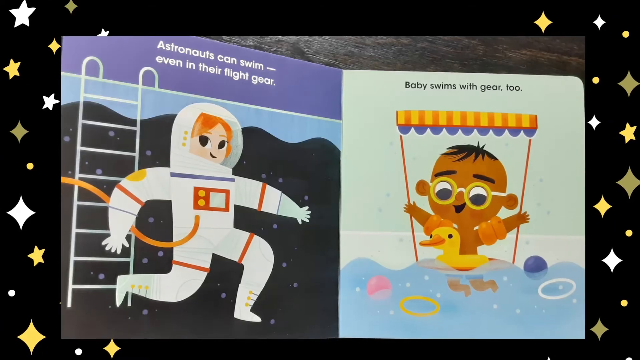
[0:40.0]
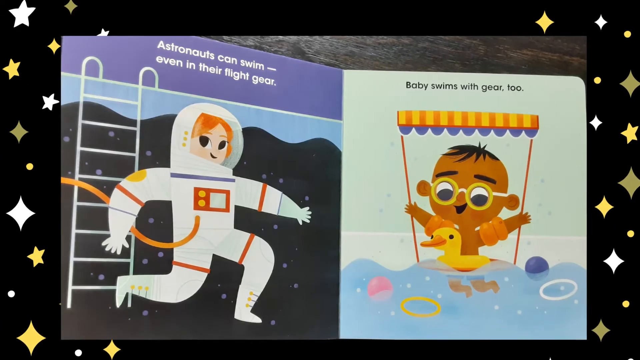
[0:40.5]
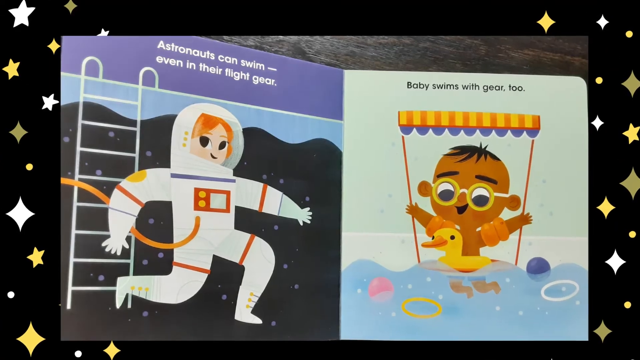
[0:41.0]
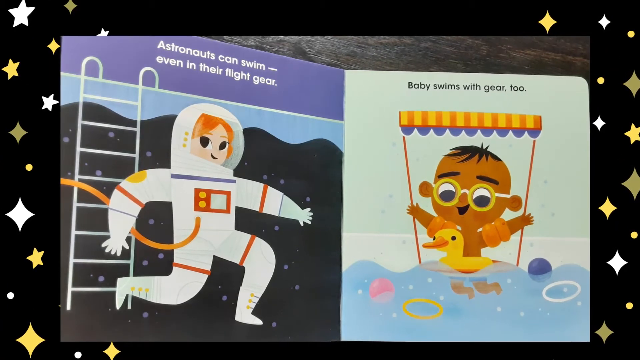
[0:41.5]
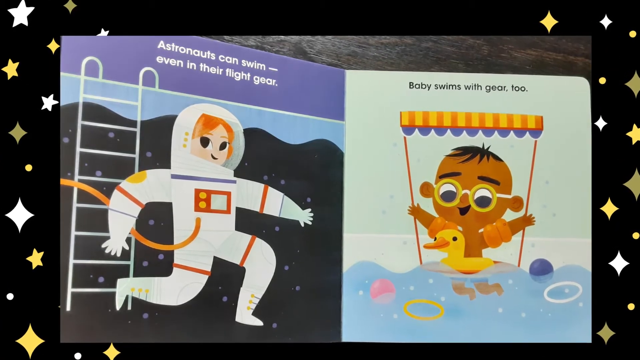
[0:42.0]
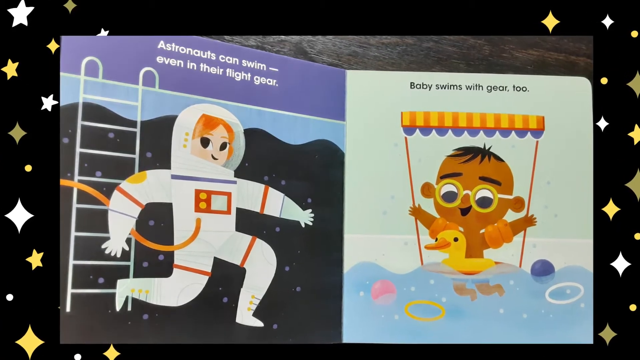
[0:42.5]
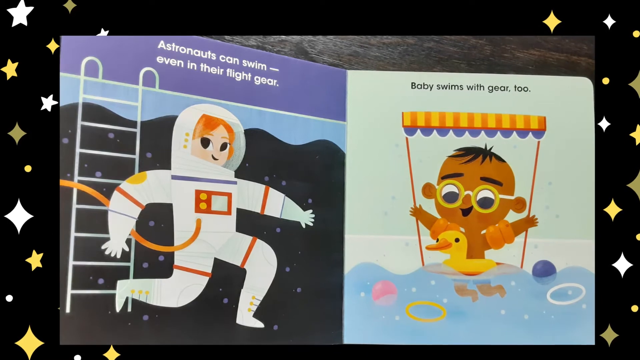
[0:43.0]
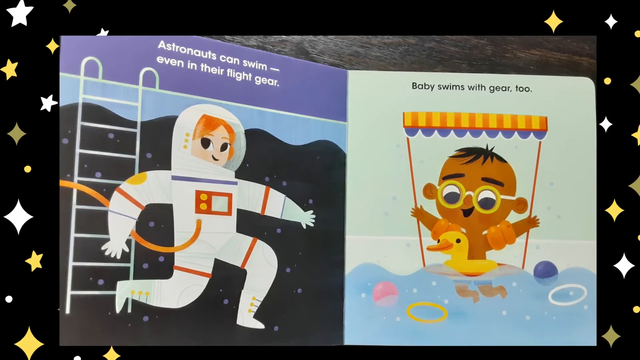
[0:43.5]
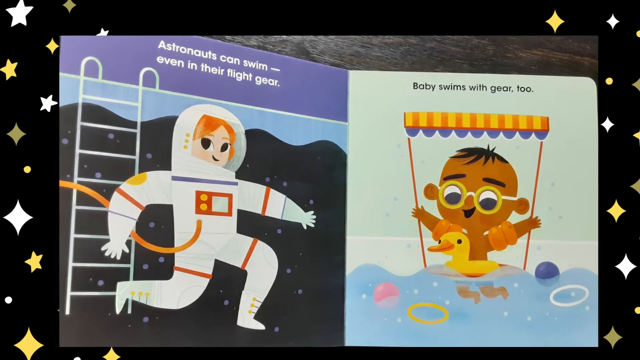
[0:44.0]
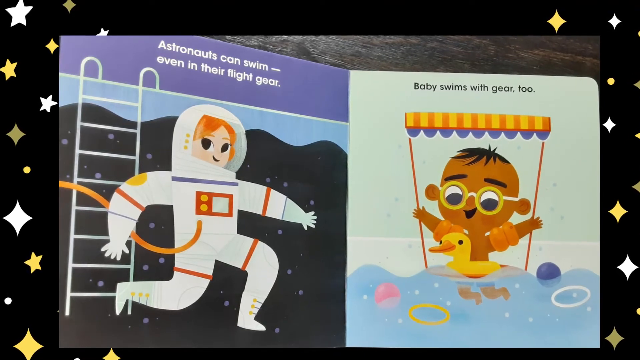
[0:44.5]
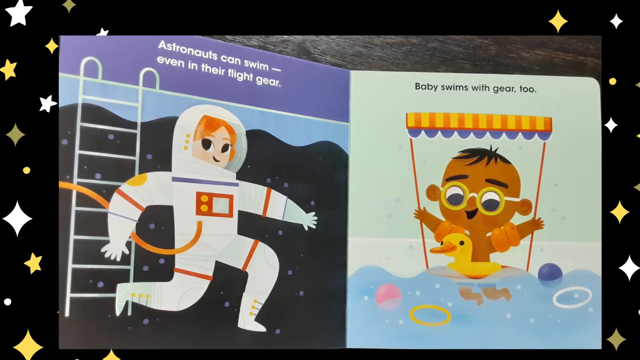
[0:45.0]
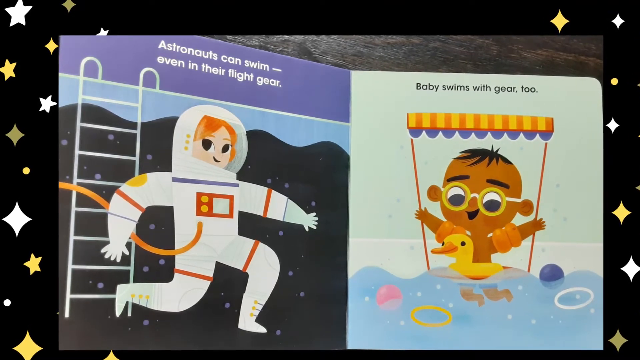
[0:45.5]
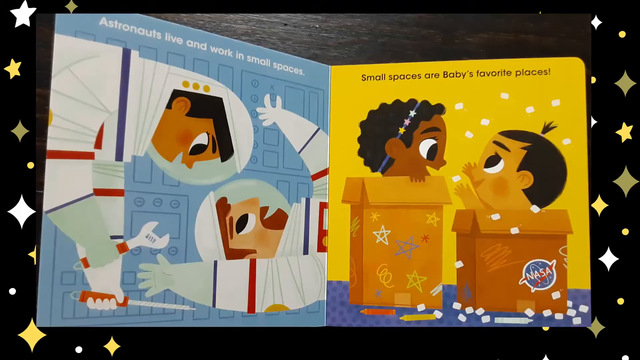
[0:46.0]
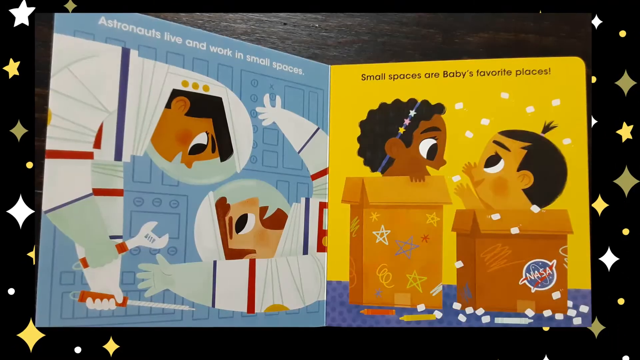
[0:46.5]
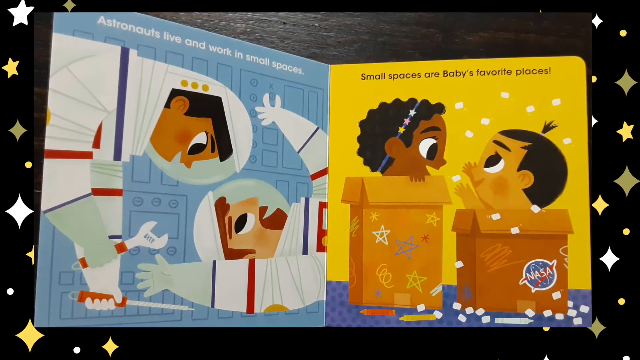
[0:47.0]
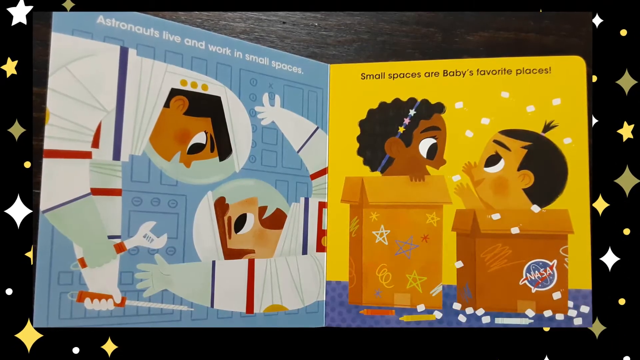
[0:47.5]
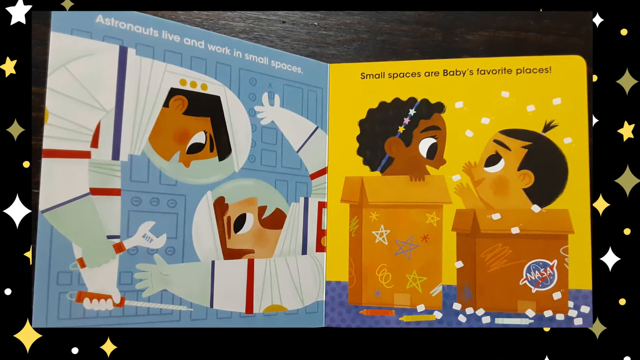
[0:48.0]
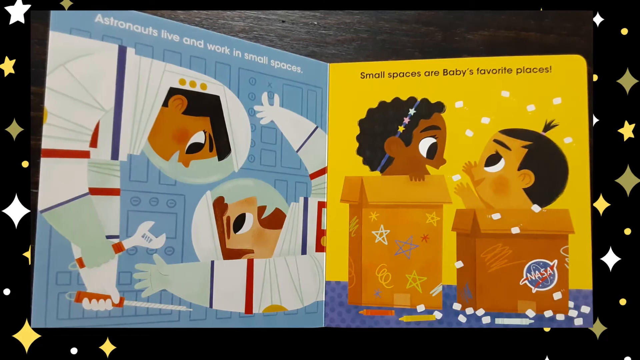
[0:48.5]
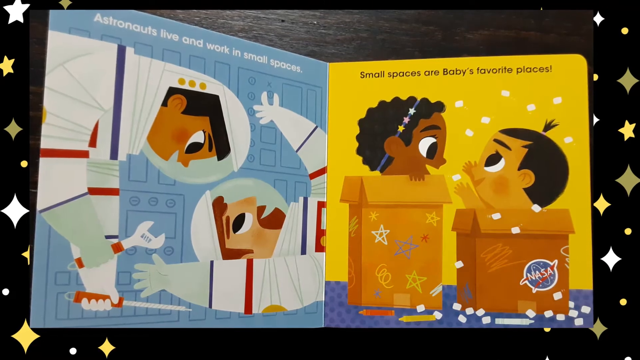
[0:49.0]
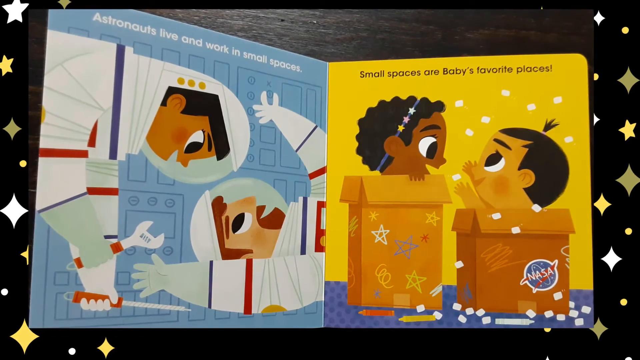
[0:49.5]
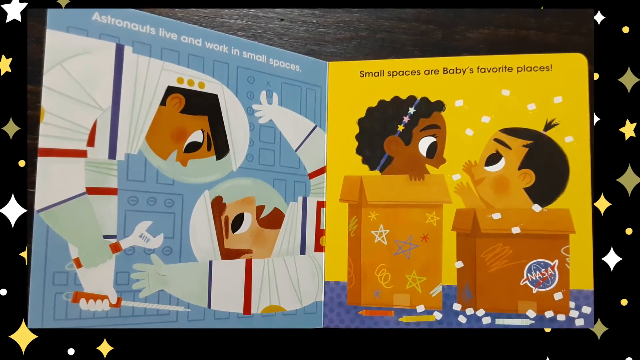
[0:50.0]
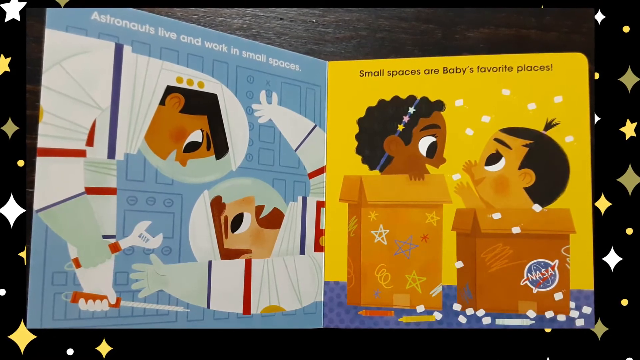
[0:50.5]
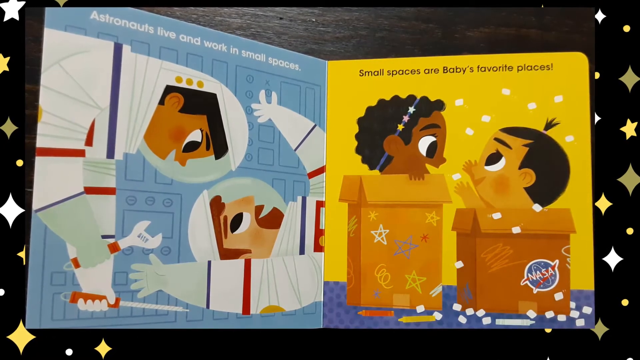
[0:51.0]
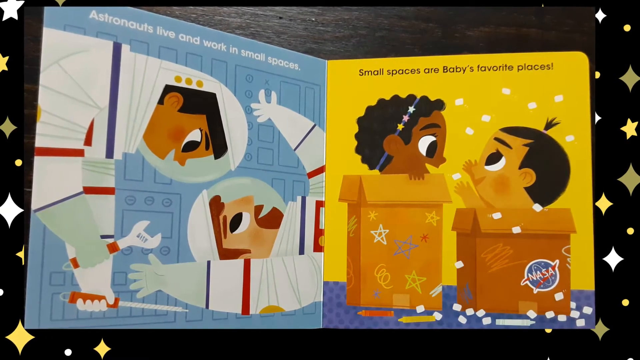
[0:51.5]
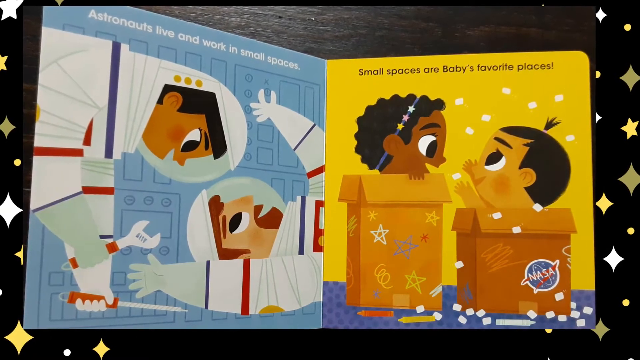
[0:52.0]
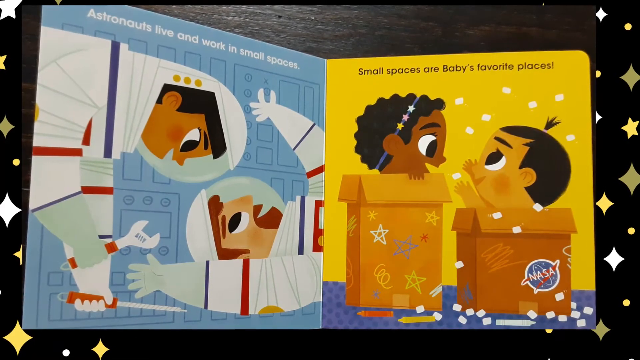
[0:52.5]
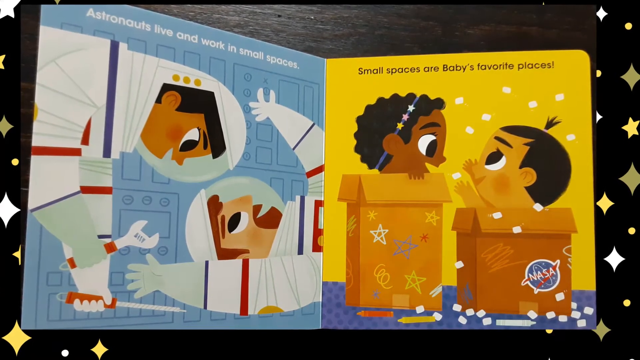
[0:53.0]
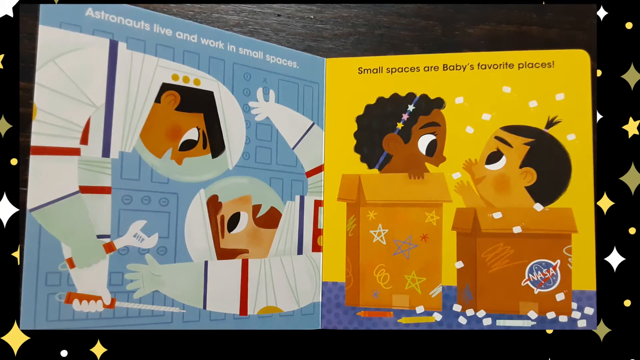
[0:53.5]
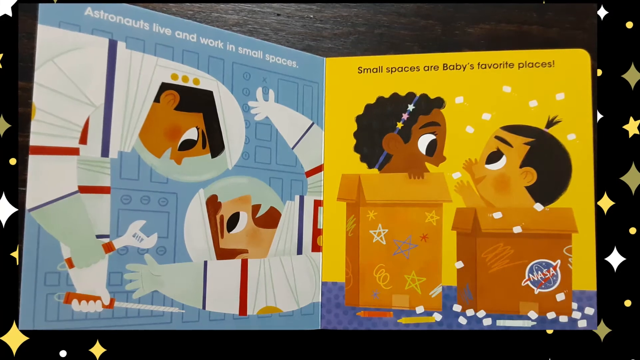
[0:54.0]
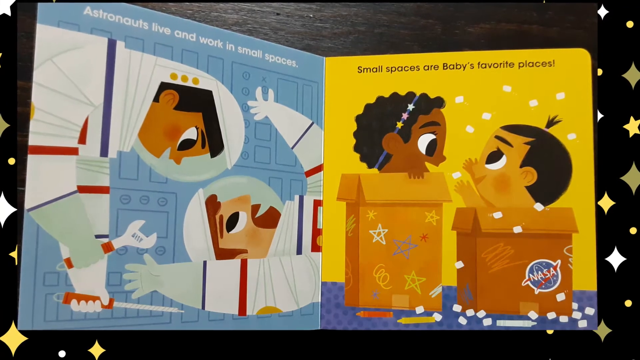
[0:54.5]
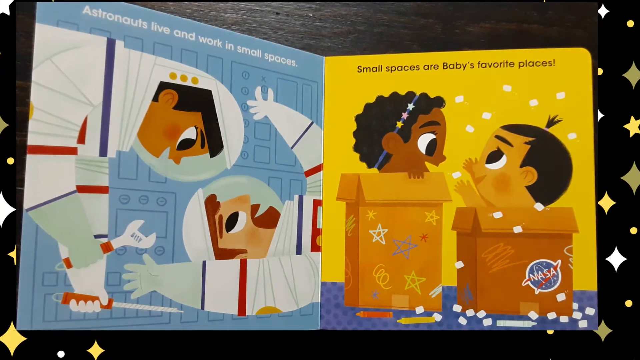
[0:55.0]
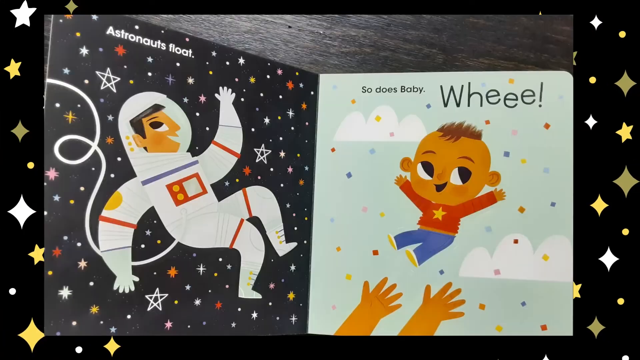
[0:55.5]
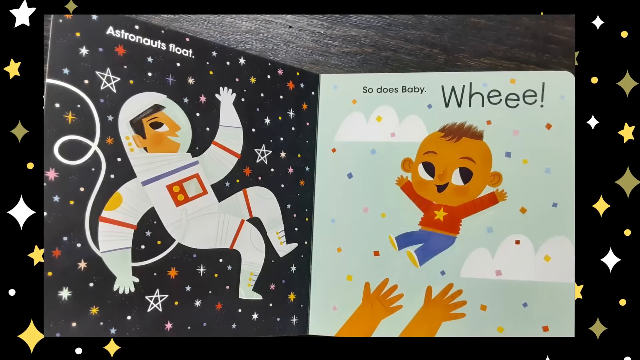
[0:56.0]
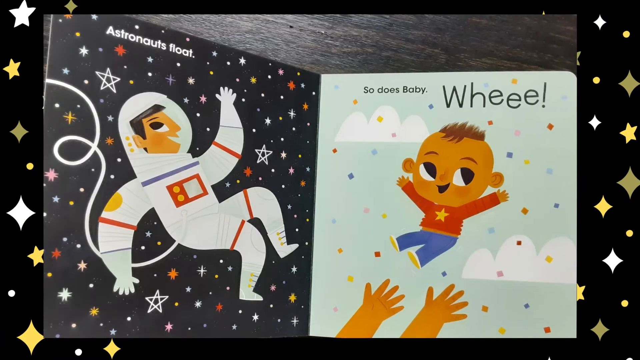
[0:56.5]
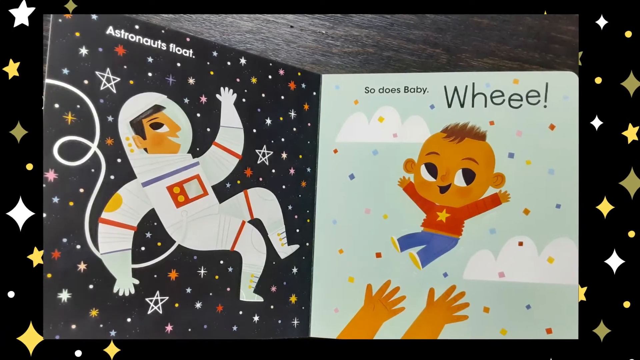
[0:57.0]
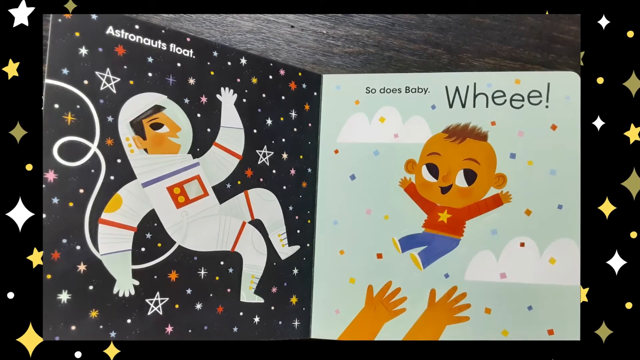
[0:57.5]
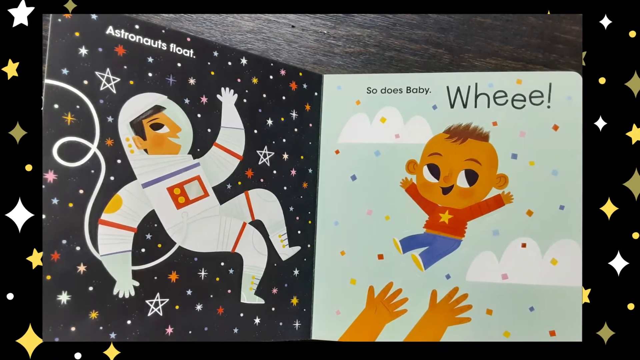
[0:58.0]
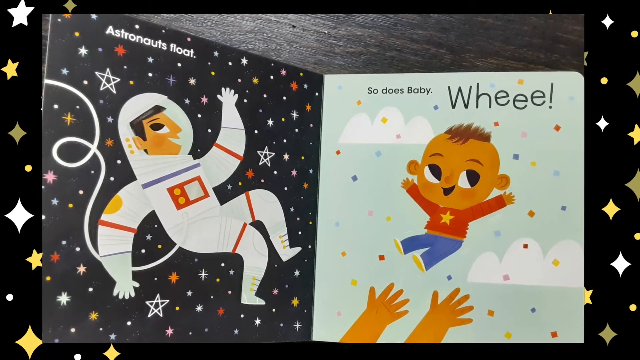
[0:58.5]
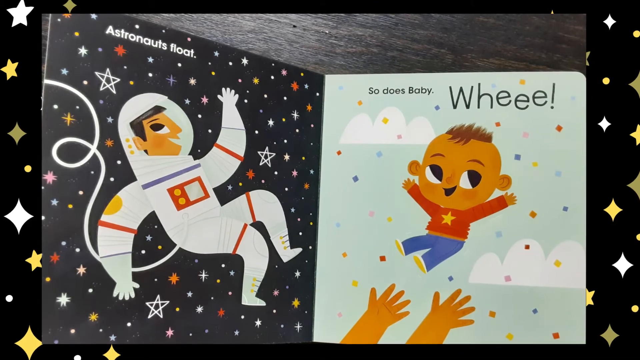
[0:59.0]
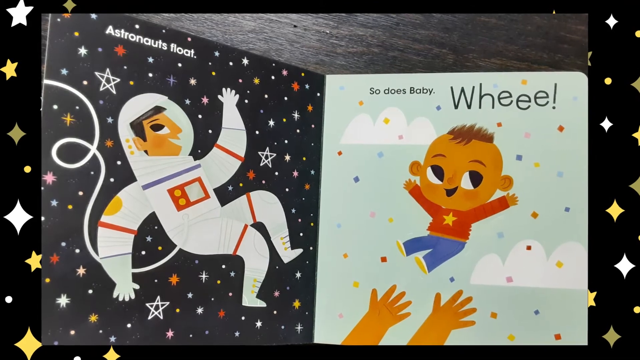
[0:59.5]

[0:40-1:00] A book is open, somewhat like a spread of pages. On the right-hand side, a female astronaut walks on top of a blackish background, with steps and a pipe-like thing where she is walking. Text above reads "astronauts can swim even in their flight gear". On the right-hand side there is also a baby with a dark doll, raising his hands and wearing swimming glasses, with water around. Text above reads "baby swims with gear 2". The background is black. The book's page is turned, showing two astronauts who live and work in small spaces, with the two of them having a little space where they are. The book is then paged again.